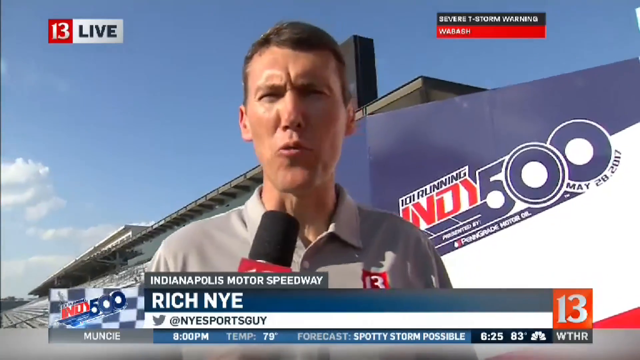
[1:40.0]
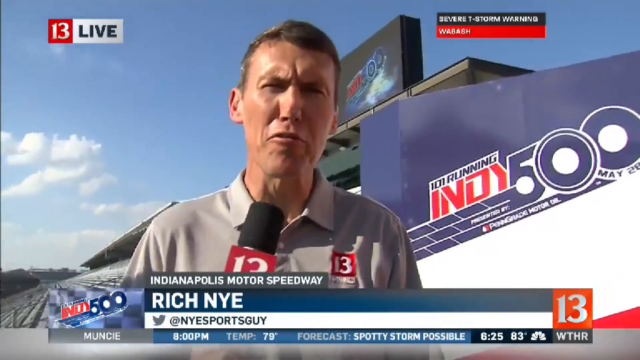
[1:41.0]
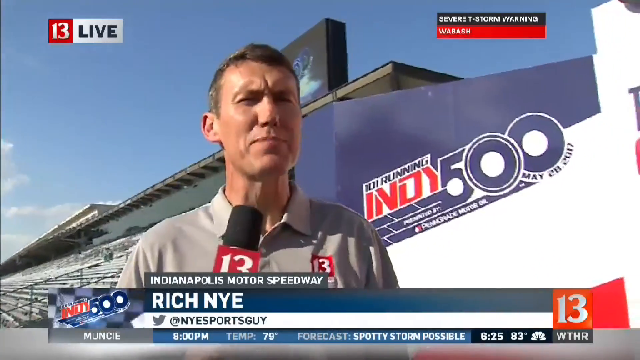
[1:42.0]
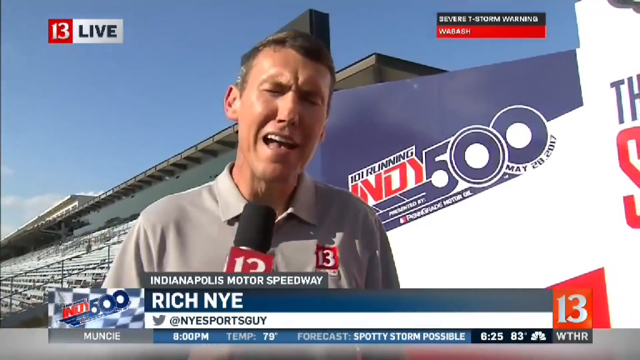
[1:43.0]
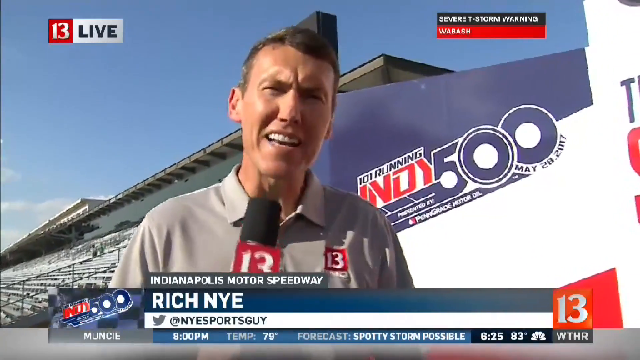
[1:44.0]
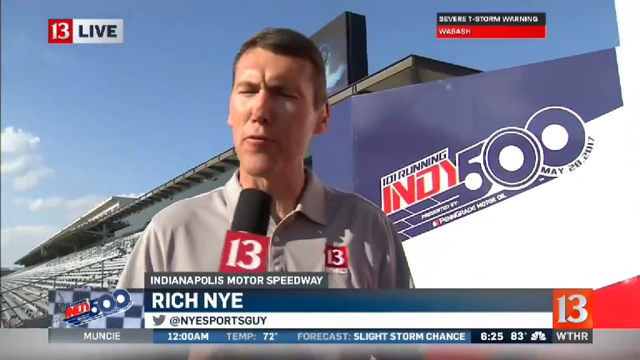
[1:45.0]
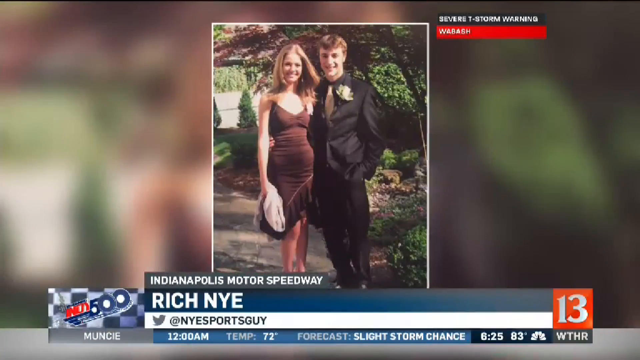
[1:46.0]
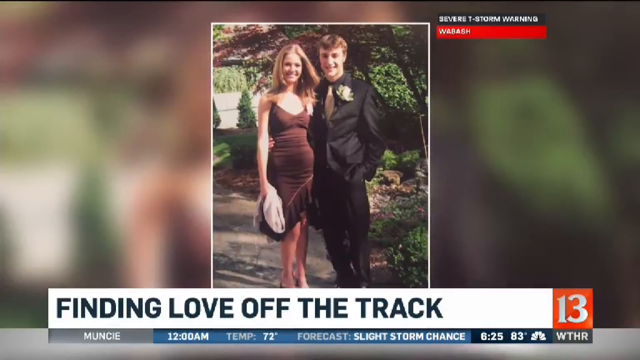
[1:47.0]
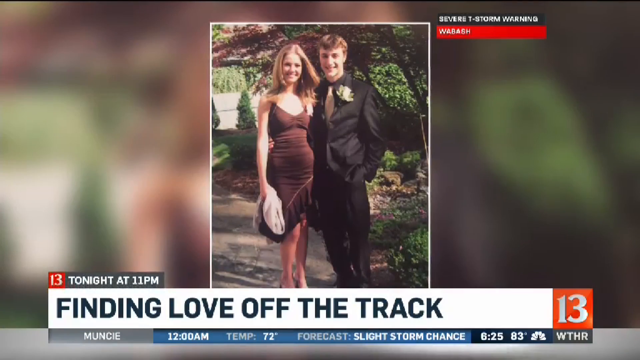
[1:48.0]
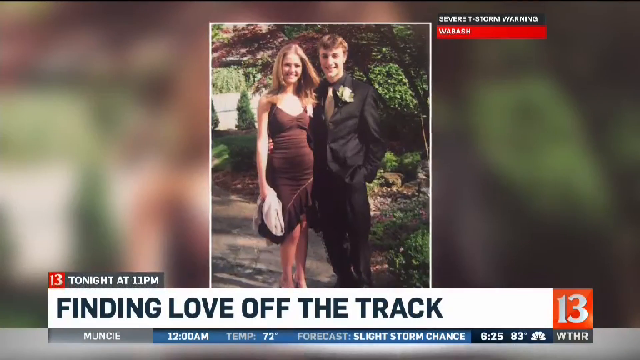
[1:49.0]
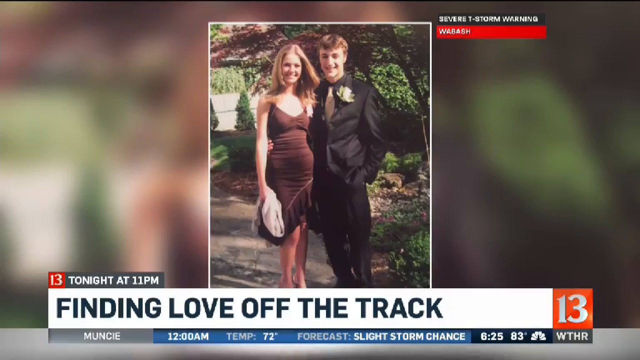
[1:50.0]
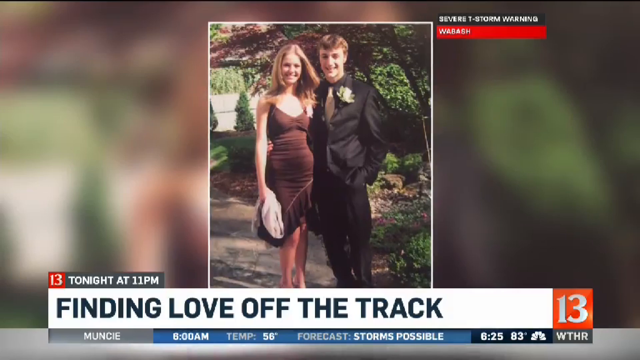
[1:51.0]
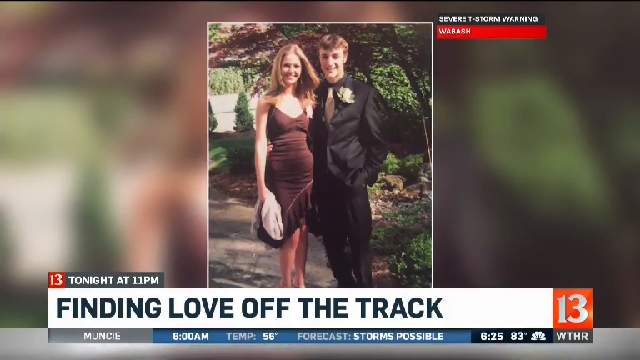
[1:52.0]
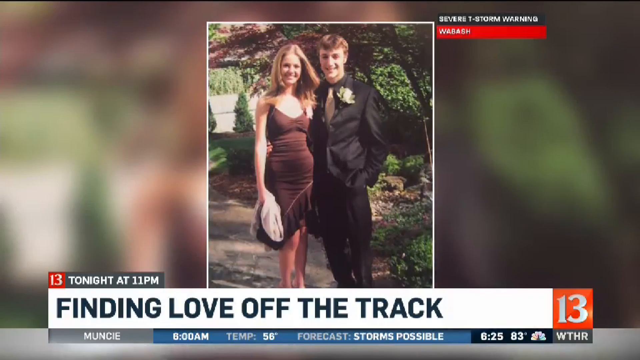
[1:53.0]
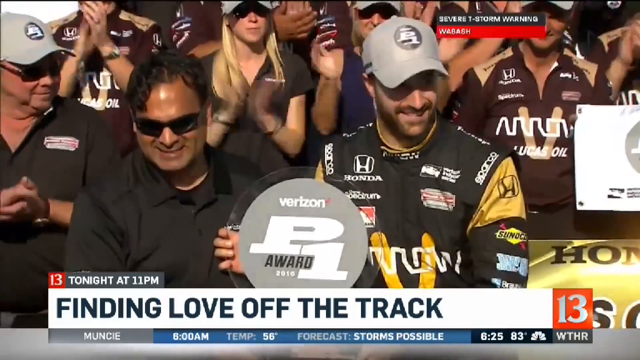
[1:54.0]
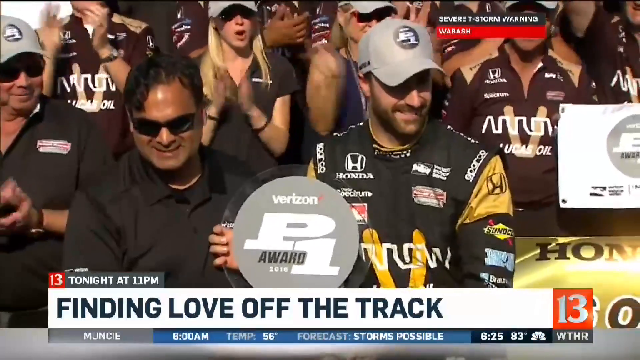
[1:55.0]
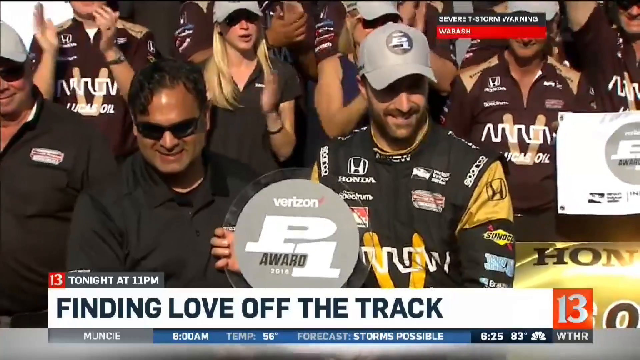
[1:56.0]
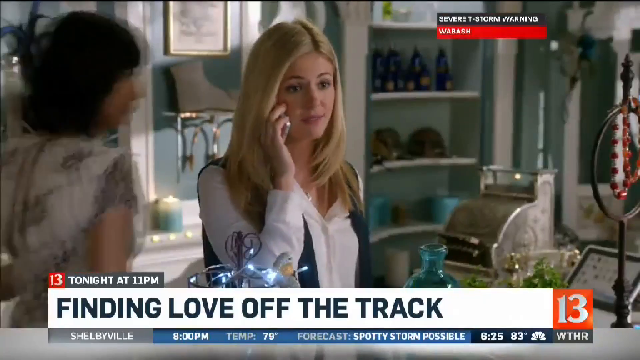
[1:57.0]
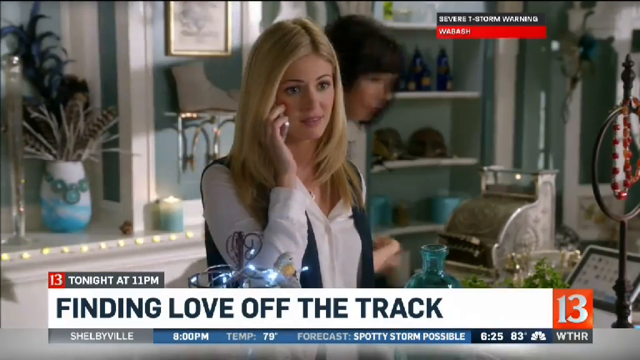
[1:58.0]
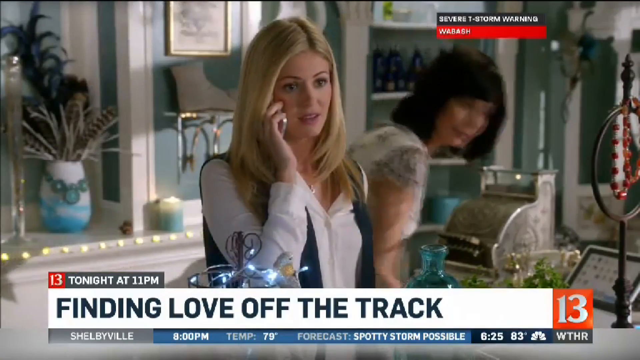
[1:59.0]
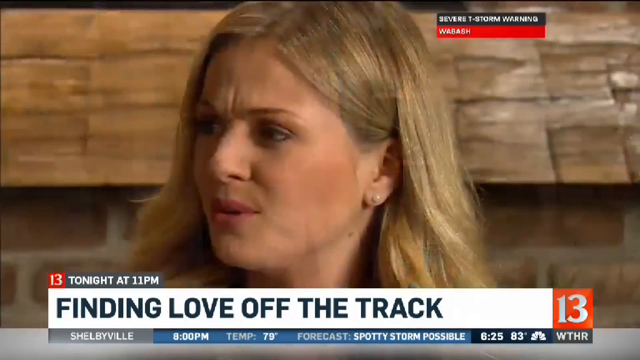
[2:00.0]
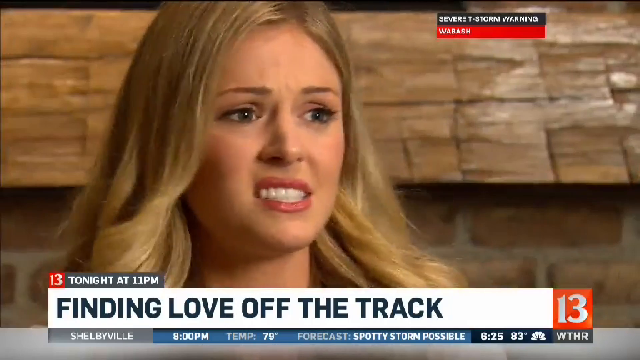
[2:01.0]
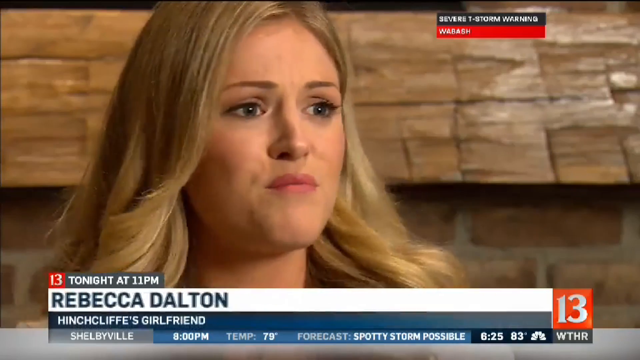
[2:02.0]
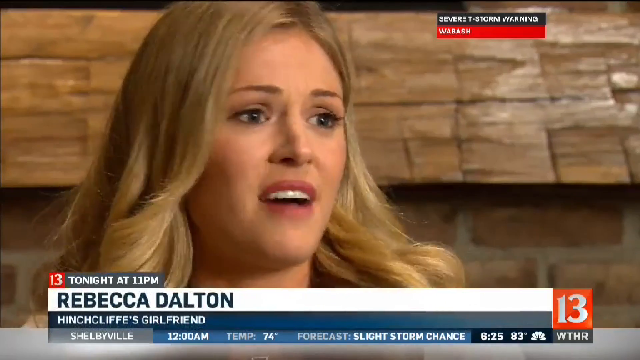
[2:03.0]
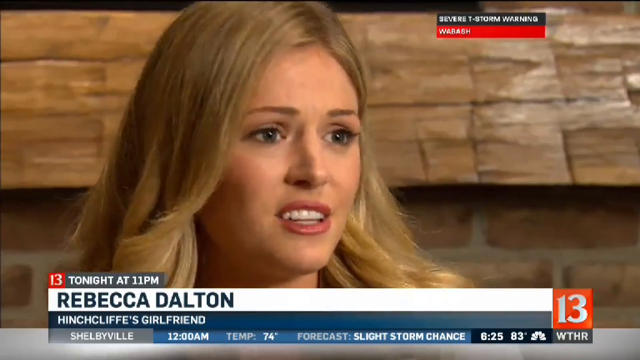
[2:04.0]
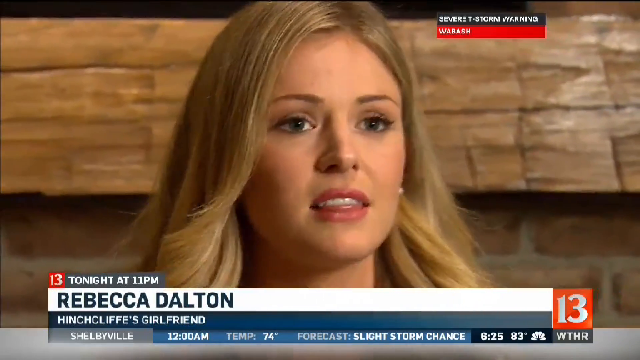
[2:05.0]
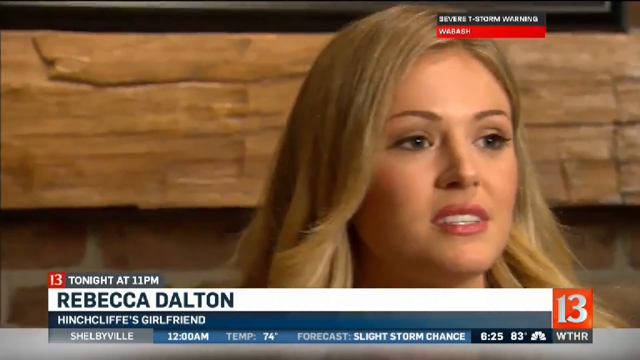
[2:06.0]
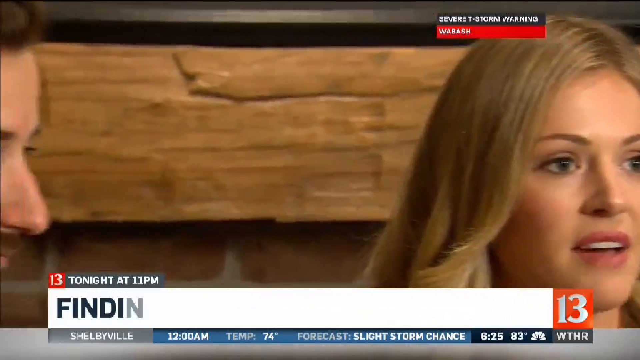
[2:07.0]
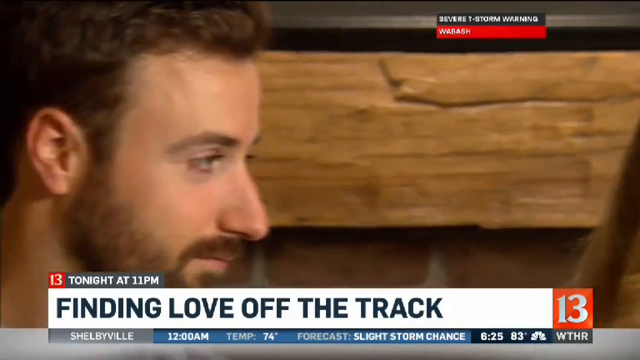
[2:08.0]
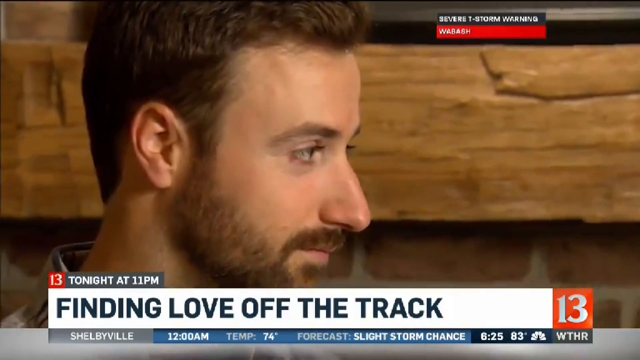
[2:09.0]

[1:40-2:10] Rich Nye speaks into the microphone, and the video cuts to a photo with a banner reading "Finding Love Off the Track", premiering tonight at 11pm. In the picture a blonde girl in a brown dress is held by a blonde white man in an all-black suit. A video then shows a driver holding a Verizon Award next to people clapping for him, along with another man in a black shirt and dark glasses standing next to him, probably an owner of something. Next, a blonde girl talks on the phone while a black-haired girl passes behind her. The girl is identified as Rebecca Dalton, Hinchcliffe's girlfriend, and the interview is said to premiere tonight at 11pm.